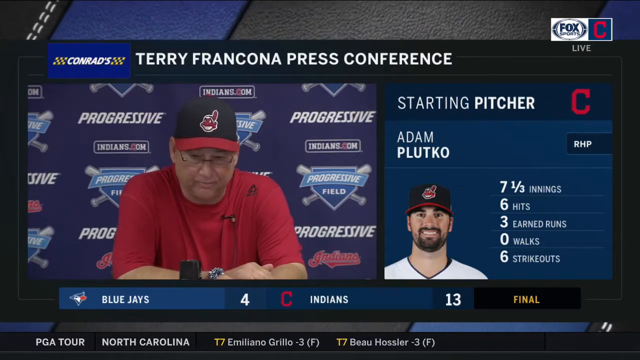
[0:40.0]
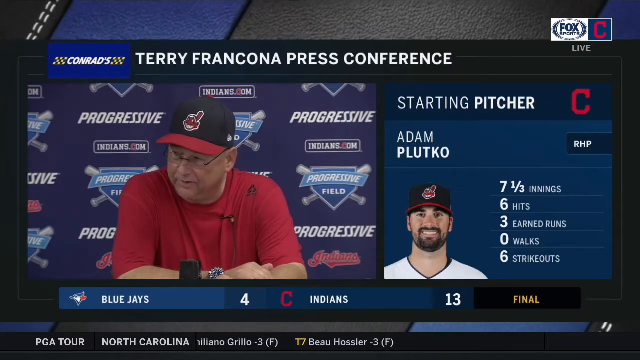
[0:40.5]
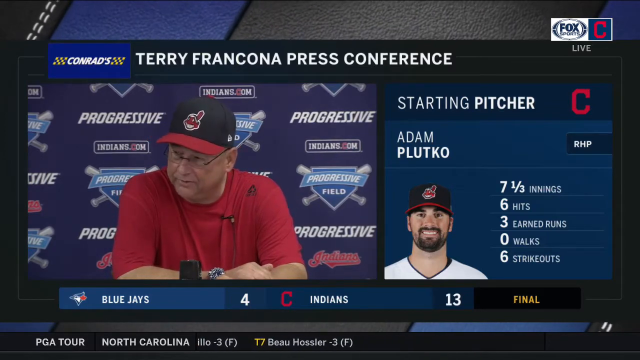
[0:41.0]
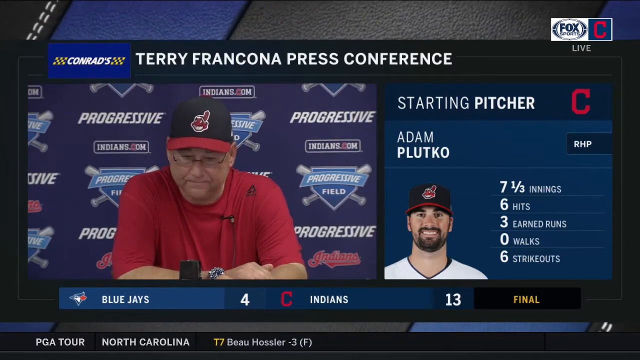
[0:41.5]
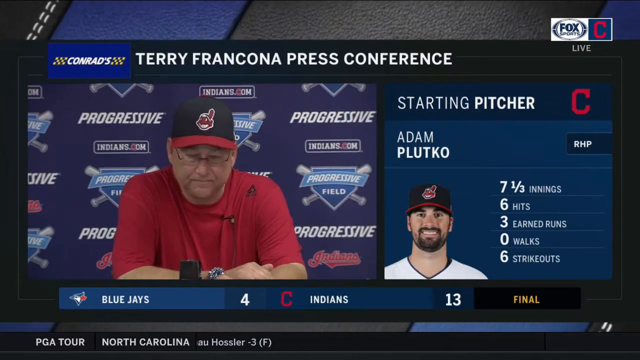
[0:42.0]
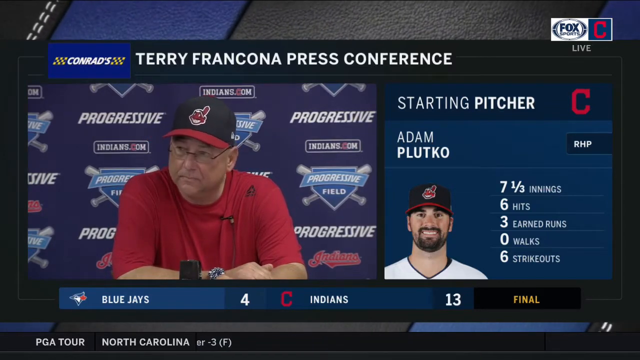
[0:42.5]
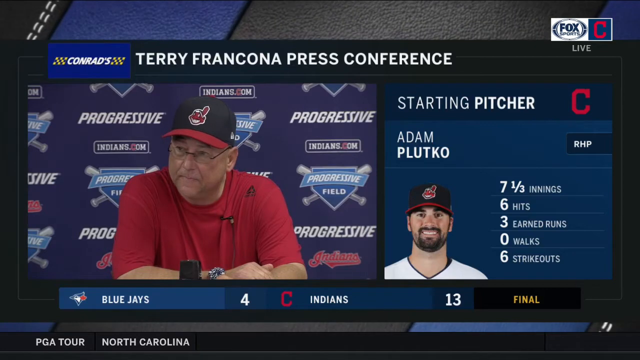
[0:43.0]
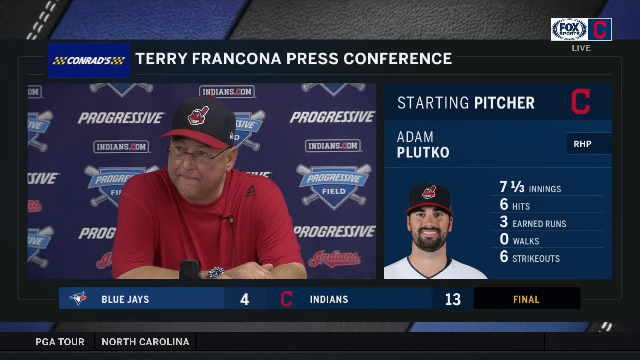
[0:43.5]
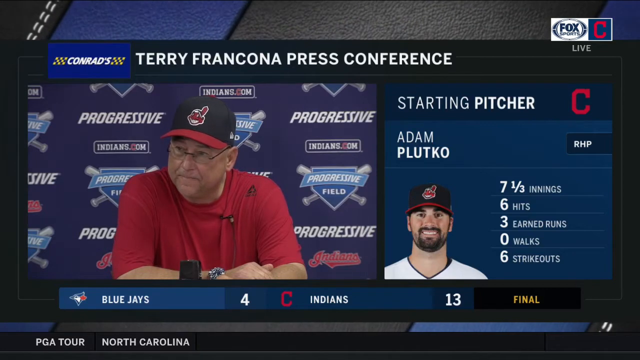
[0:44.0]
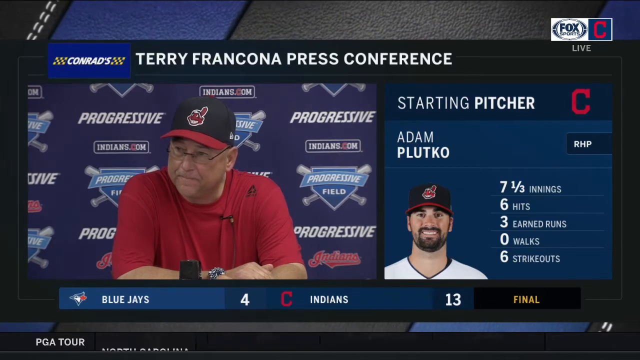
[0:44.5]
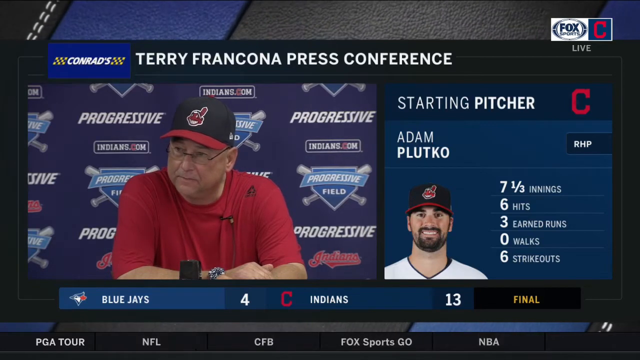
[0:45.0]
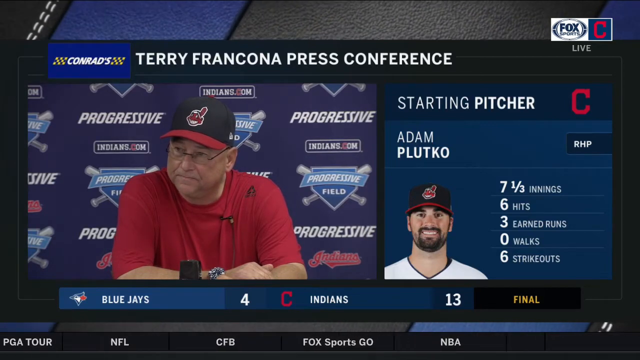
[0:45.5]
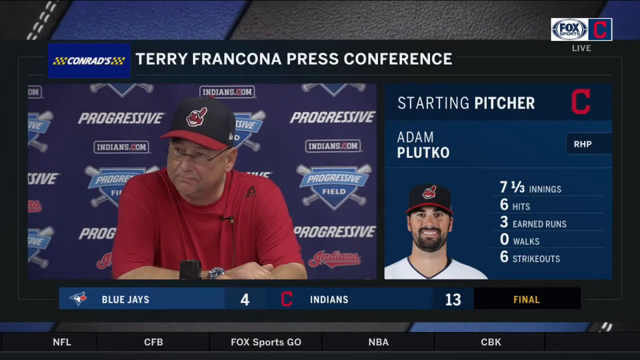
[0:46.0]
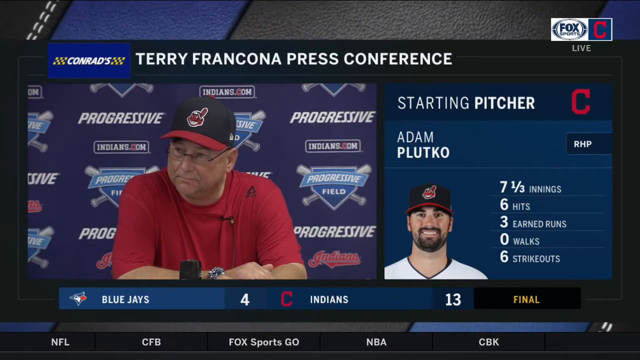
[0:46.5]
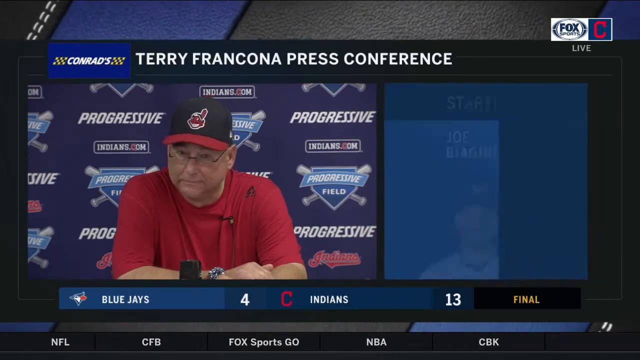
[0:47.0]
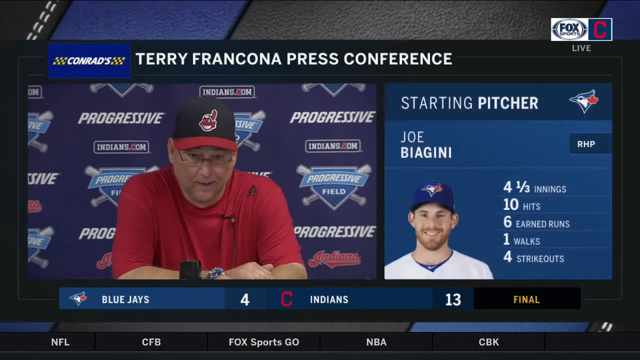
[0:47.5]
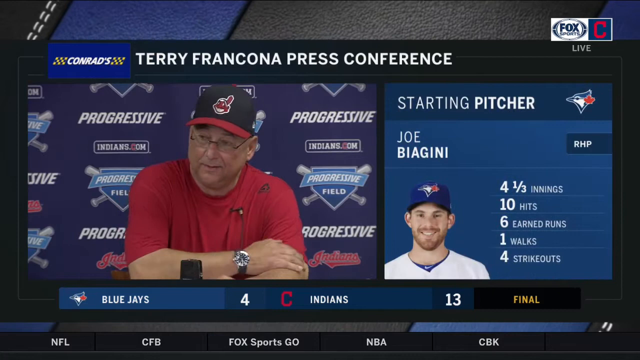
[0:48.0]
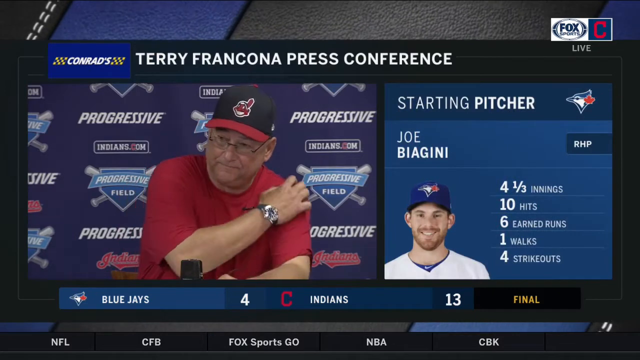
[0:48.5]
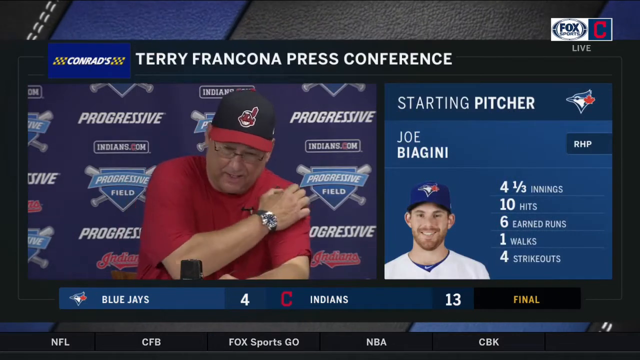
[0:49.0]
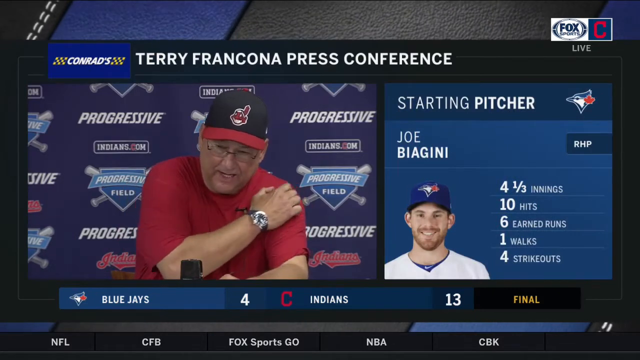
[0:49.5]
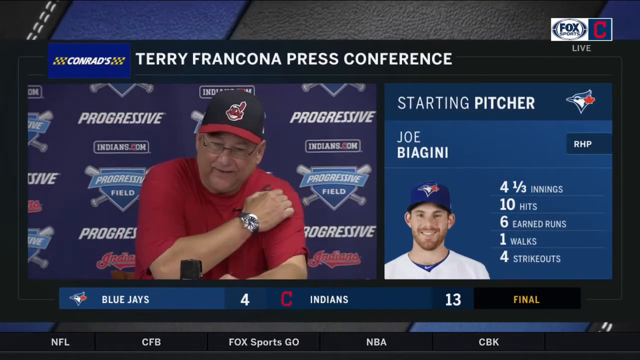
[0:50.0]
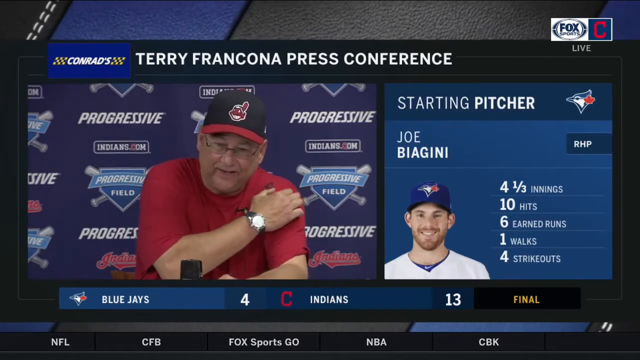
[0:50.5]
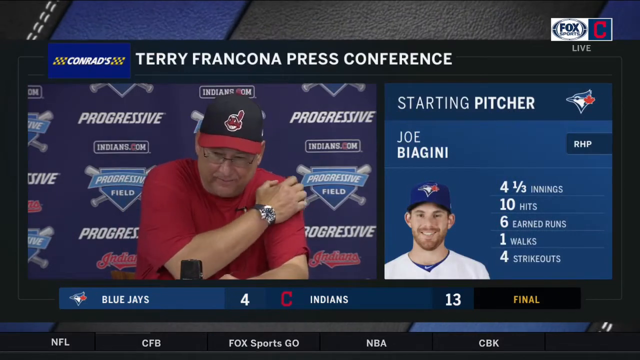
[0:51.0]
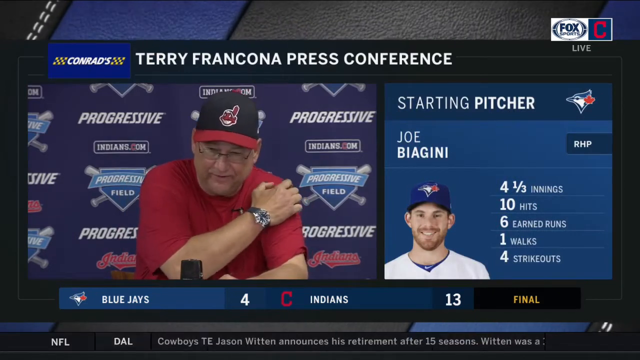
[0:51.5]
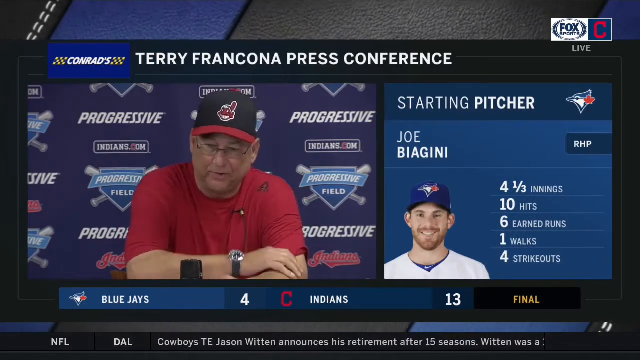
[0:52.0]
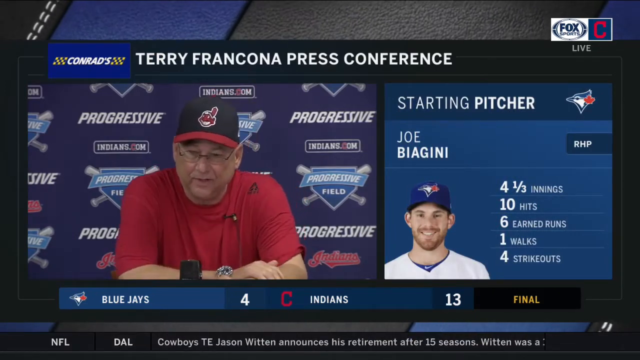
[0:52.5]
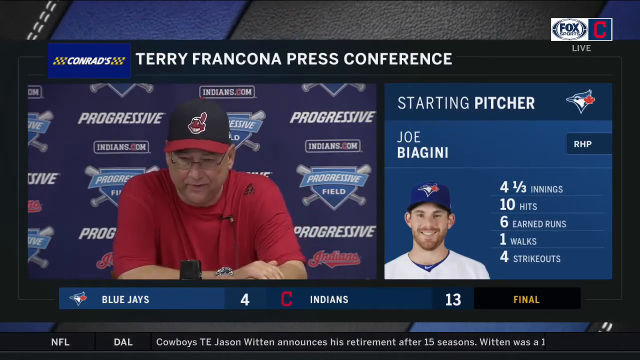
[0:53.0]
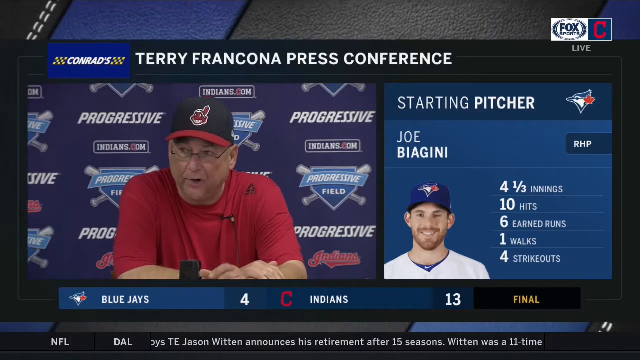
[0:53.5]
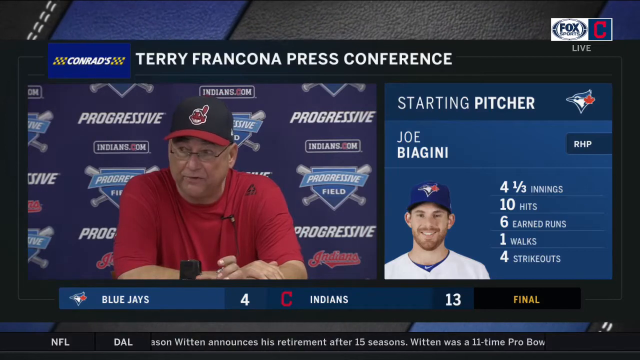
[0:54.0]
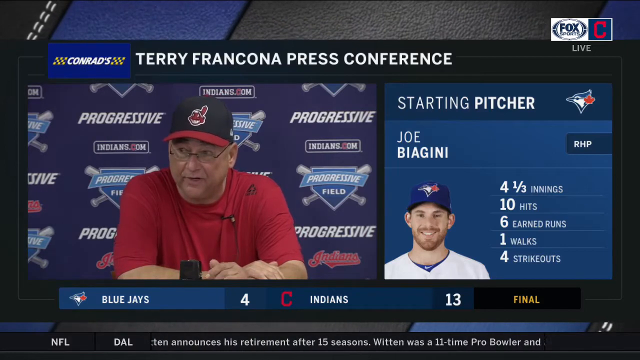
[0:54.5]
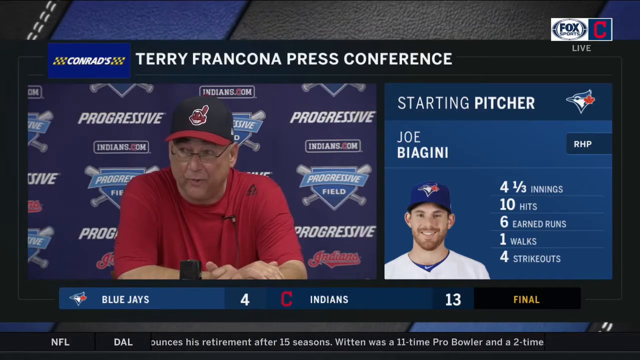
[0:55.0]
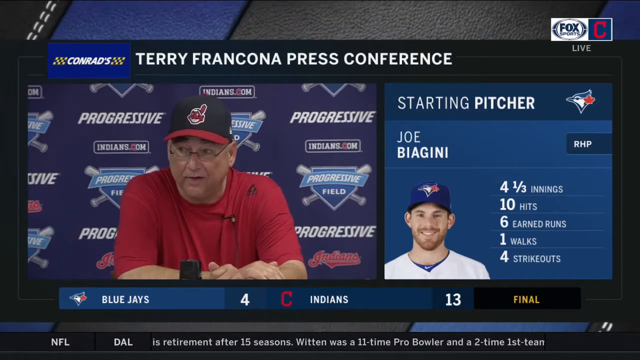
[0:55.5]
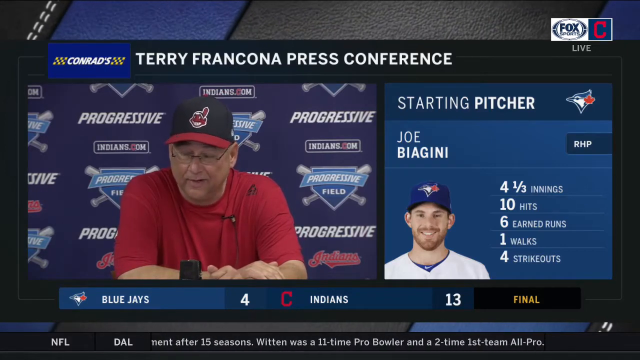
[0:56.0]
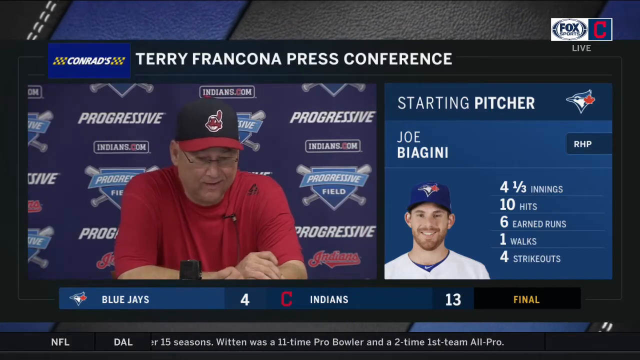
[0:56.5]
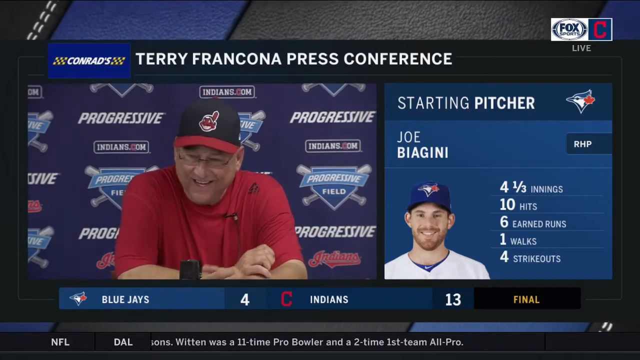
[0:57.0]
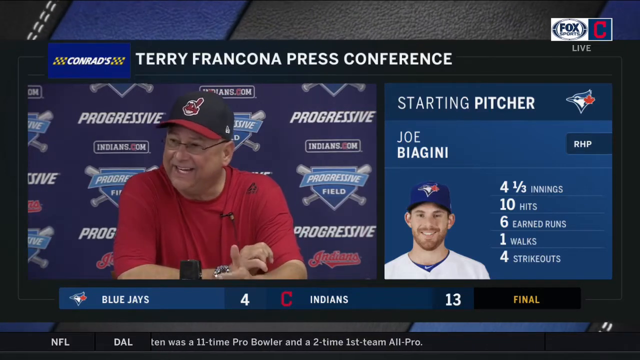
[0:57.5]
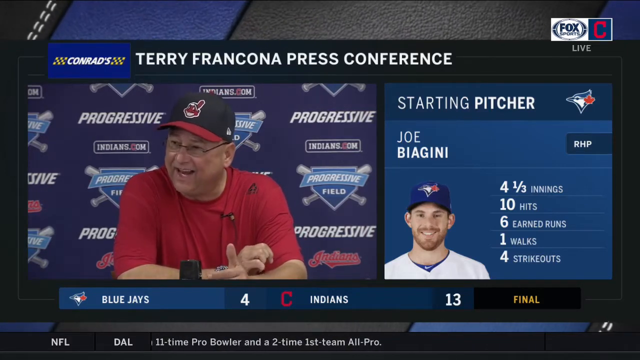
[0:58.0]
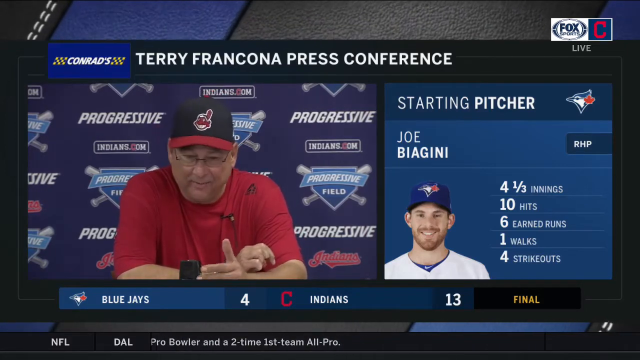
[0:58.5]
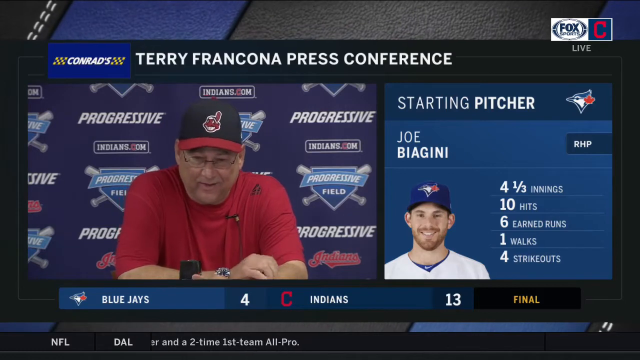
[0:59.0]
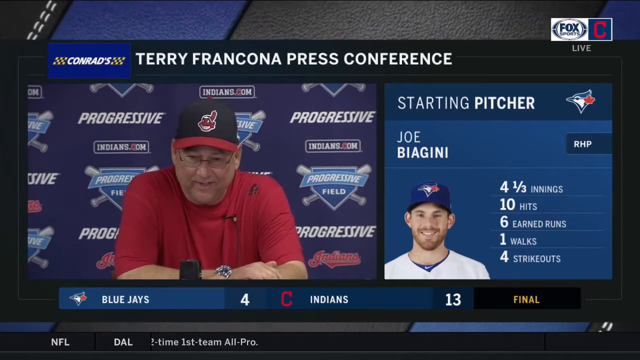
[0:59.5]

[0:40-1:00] A blue rectangle in a different shade of blue appears in the middle with white, bold, capital letters reading "CONRAD," possibly with an apostrophe s, apparently a company brand. Next, in capital letters, the text reads "Terry Francona press conference." The man on the left talks and keeps turning his head toward the left side of the screen. At one point he uses what looks like his right hand, which wears a metallic-looking watch, to scratch his shoulder. Meanwhile the stats of another player come up on the right, reading "starting pitcher" with the name Joe and, underneath, the last name Biagina; this player wears a different-colored hat.